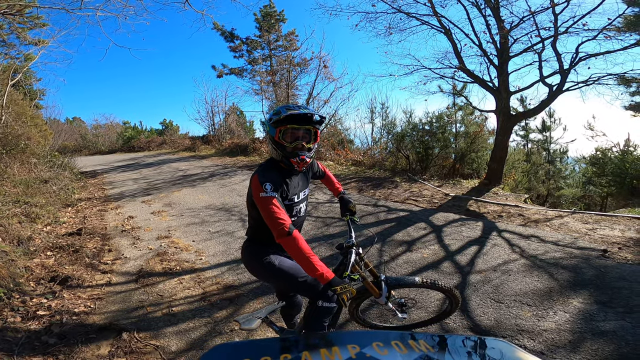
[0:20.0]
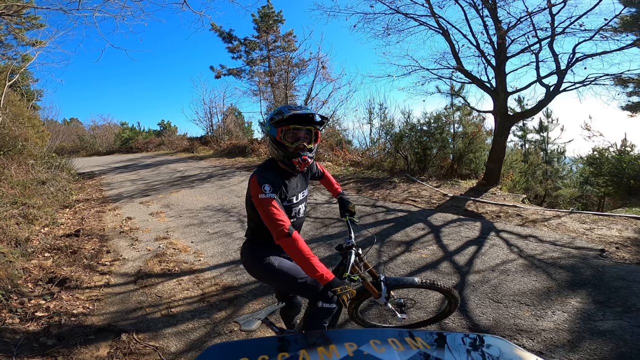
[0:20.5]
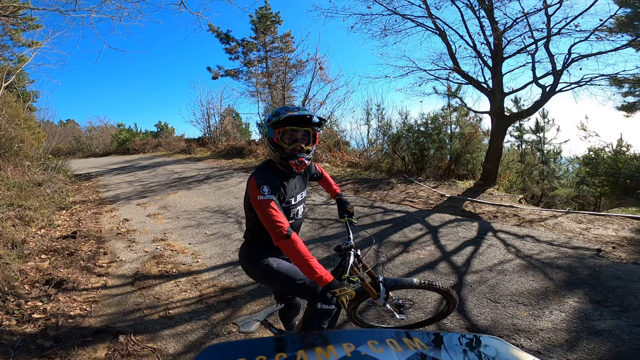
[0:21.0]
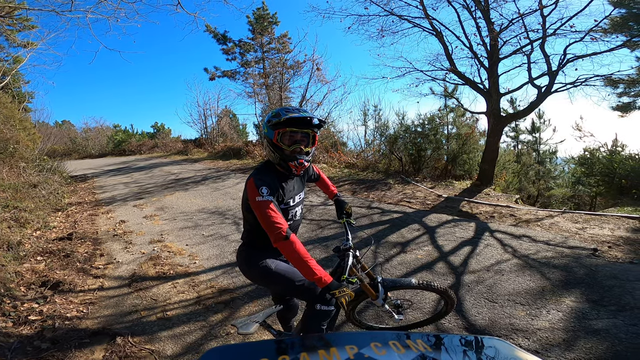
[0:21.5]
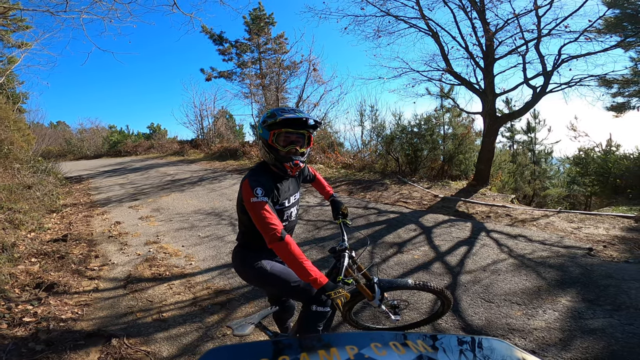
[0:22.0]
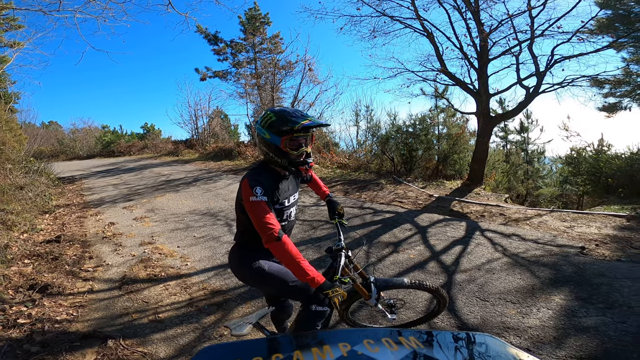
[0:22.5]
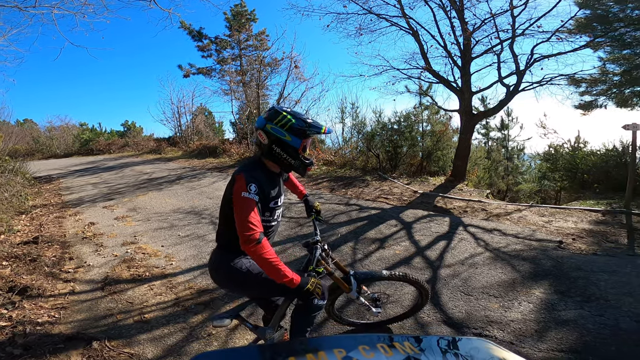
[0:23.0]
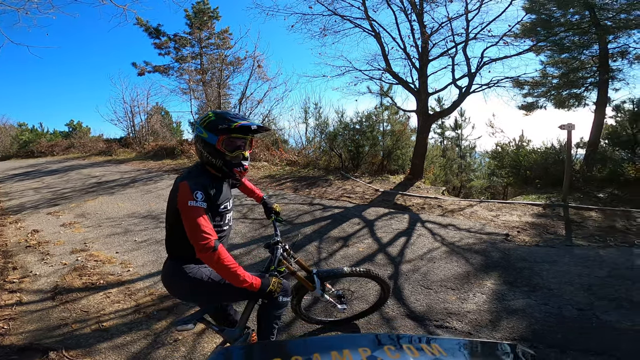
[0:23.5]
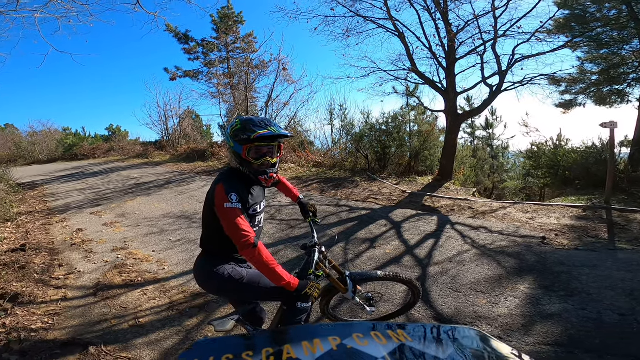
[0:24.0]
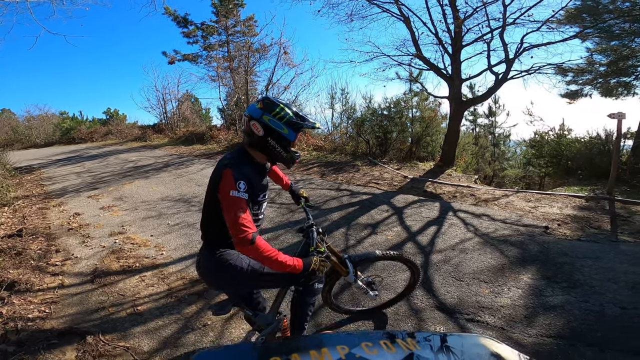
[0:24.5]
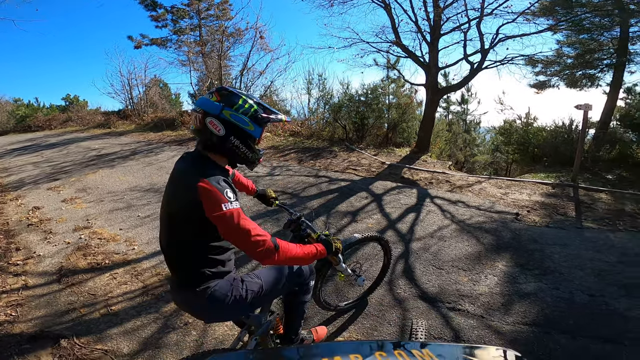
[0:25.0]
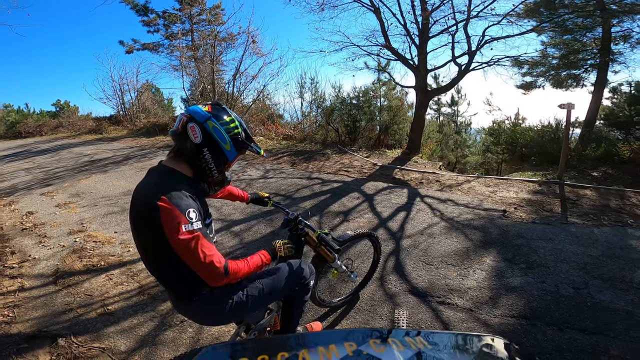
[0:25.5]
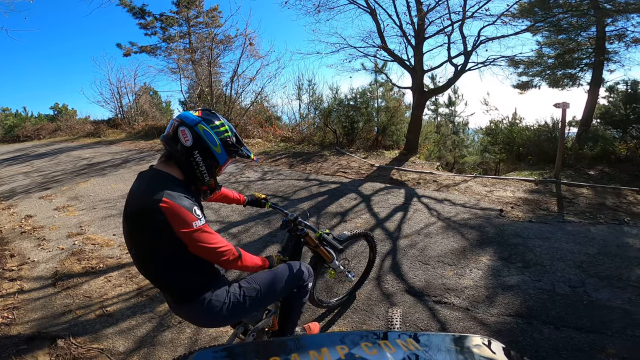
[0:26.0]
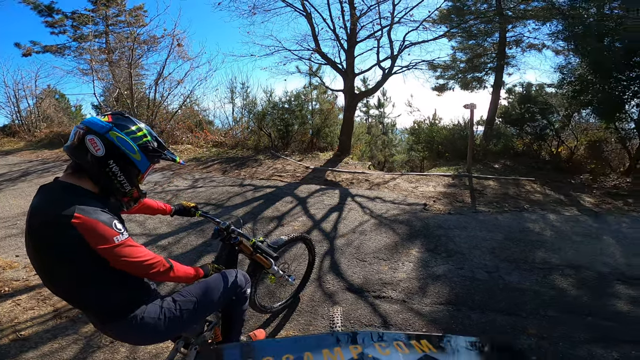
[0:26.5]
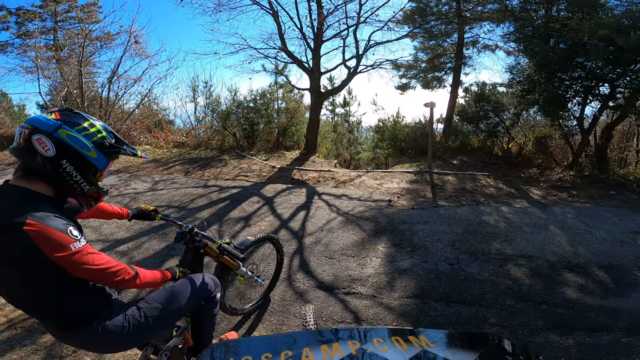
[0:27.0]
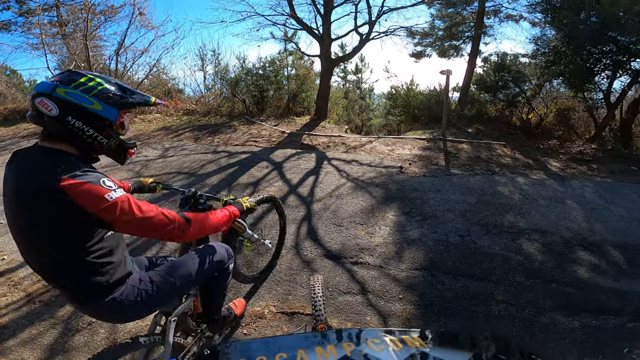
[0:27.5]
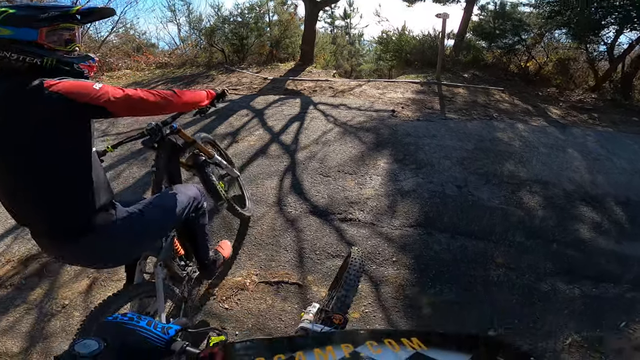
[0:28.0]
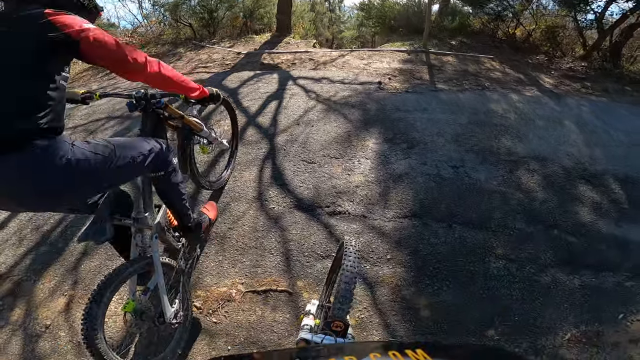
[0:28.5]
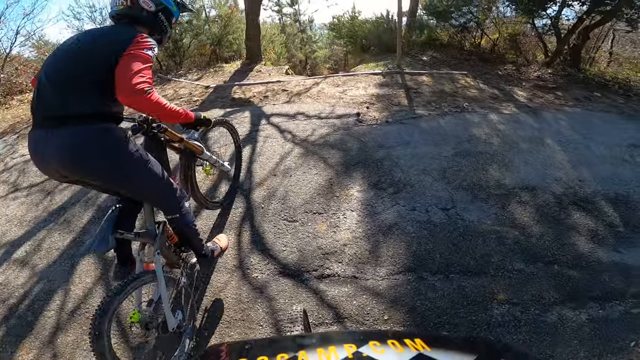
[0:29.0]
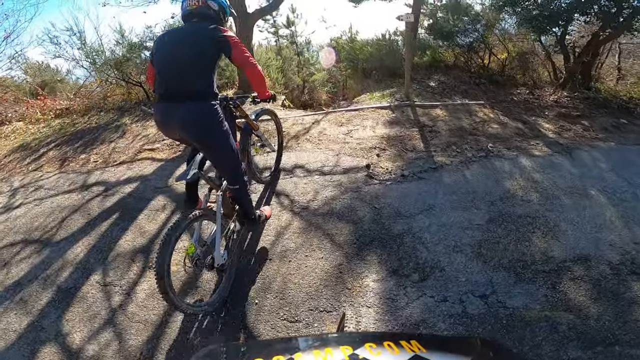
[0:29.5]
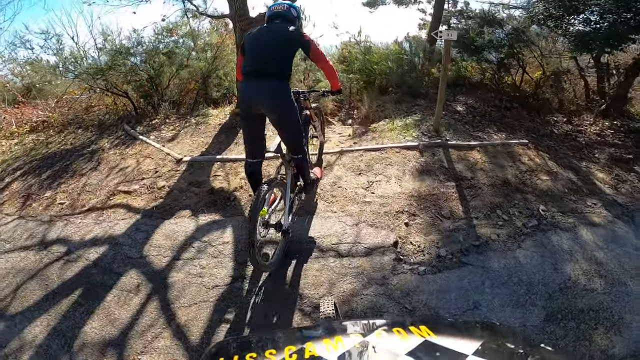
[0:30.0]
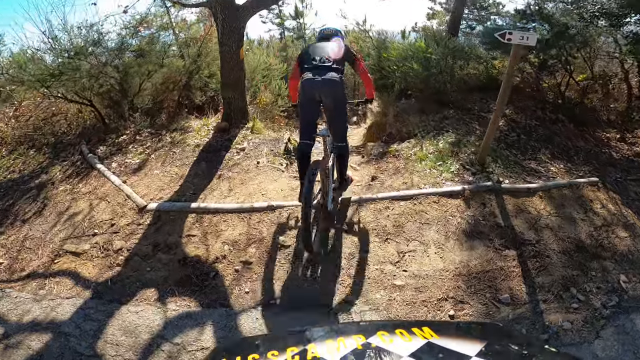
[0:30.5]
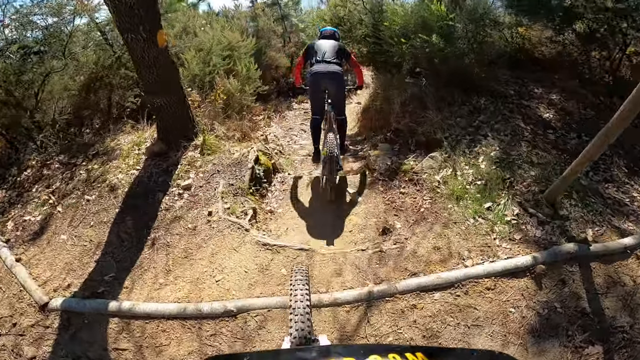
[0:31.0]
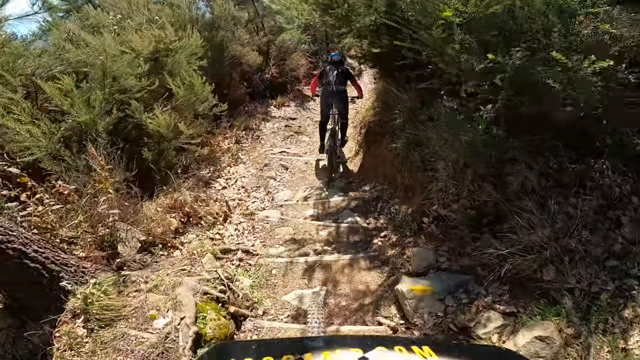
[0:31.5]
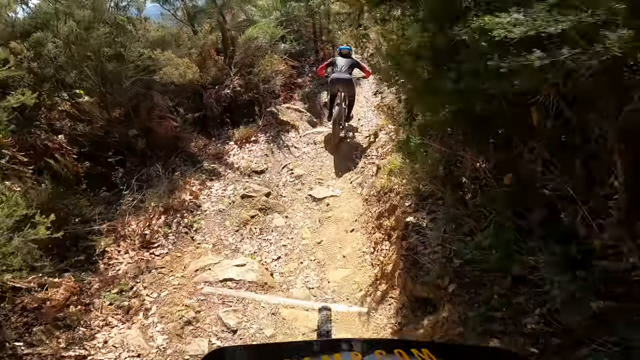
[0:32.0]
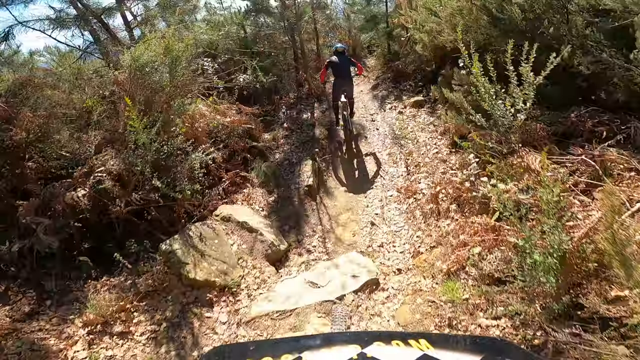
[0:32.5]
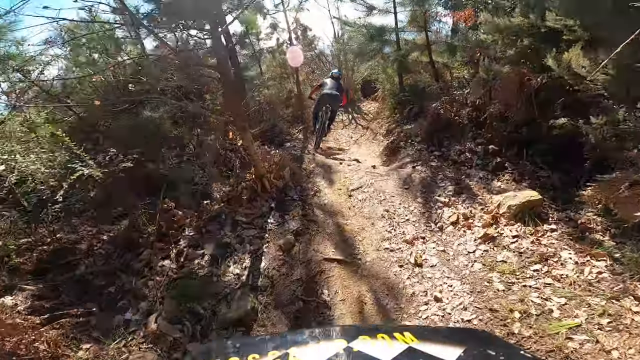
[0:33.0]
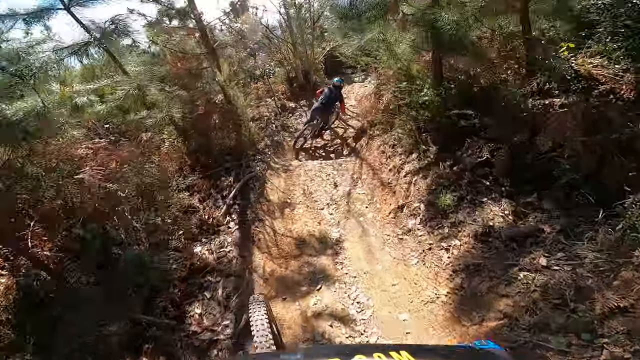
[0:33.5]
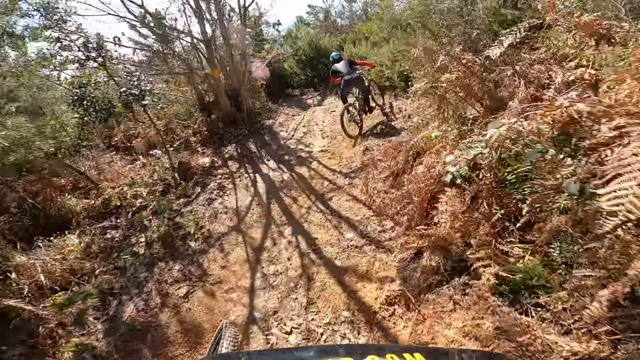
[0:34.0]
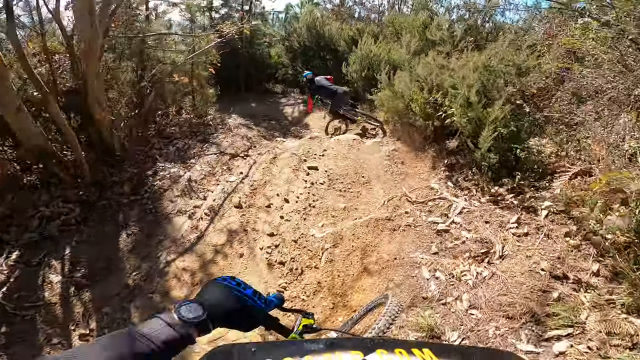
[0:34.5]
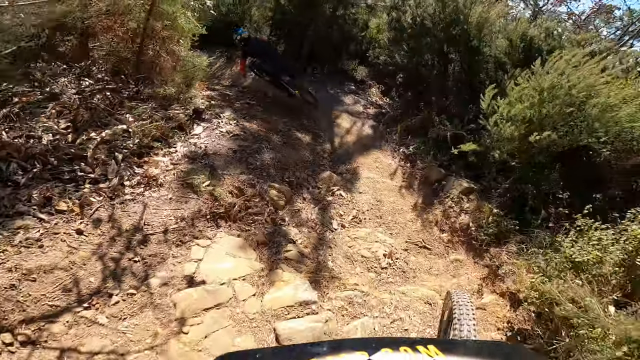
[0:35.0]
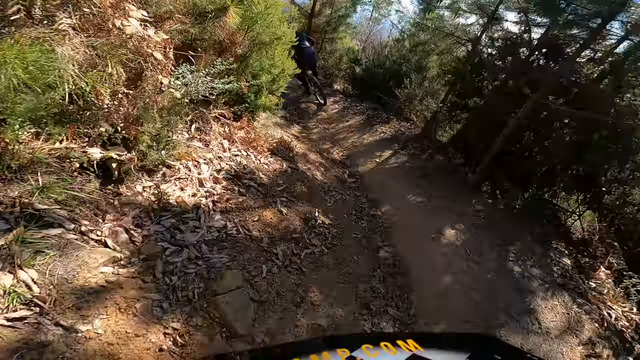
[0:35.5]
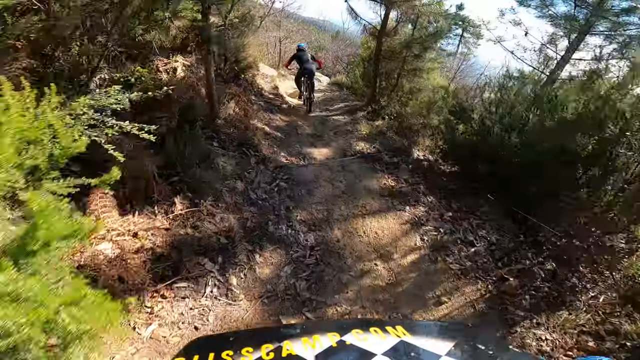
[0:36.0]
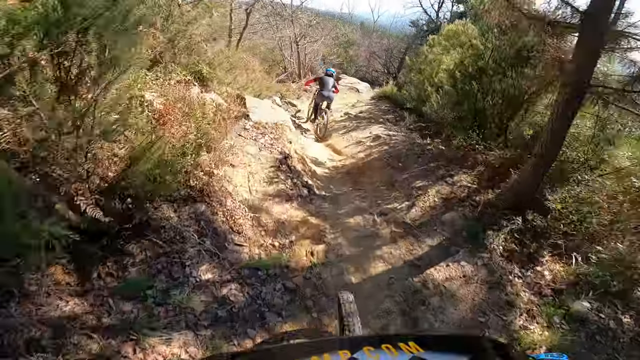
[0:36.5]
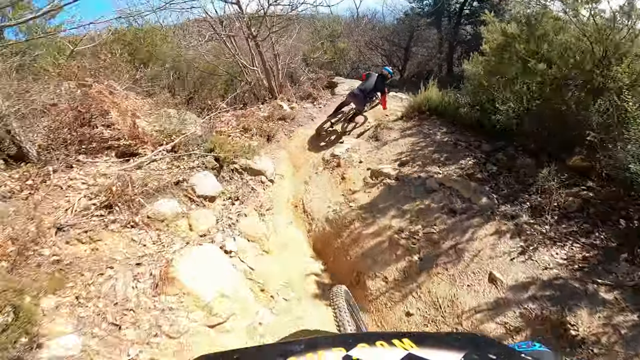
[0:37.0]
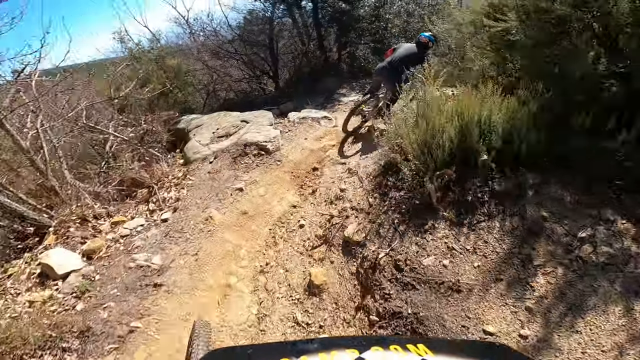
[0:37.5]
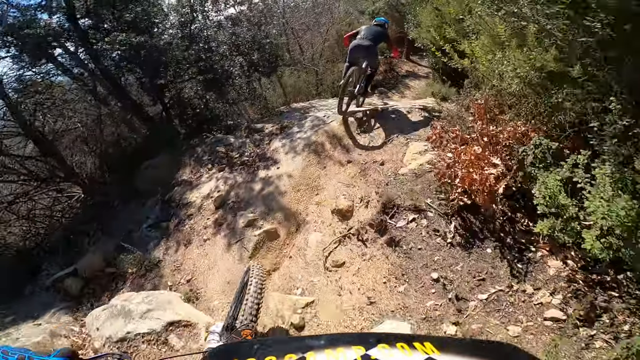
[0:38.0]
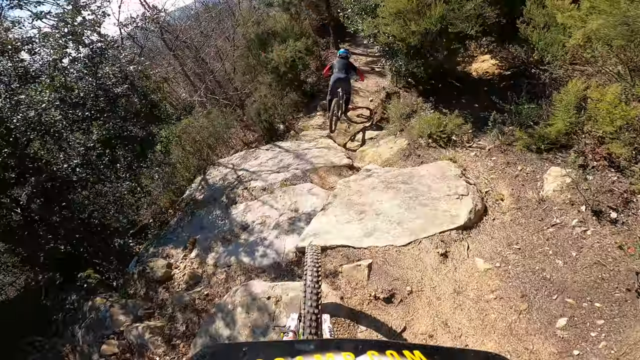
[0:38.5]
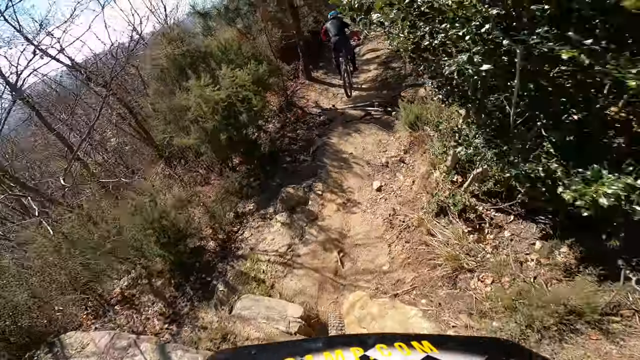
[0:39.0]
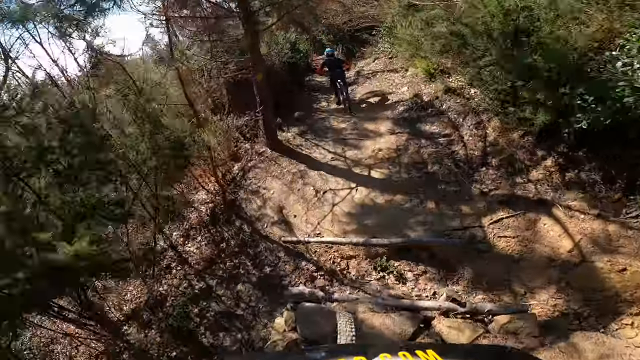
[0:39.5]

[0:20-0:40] The rider is still looking at the camera, nods his head slightly up and down, looks away straight ahead, looks back, and then faces away from the camera. The camera moves slightly so that part of his back is visible, slightly behind him. He takes his right arm and touches somewhere on the bike right below where he is sitting, then grabs the handlebars and rides off. The camera follows behind him down the road at a very fast pace. He turns quickly to the left and then to the right, hitting bumps. The road is very off-road: dirt, with rocks all over the place and bumps. The camera keeps pace behind him as he goes down the dirt road.